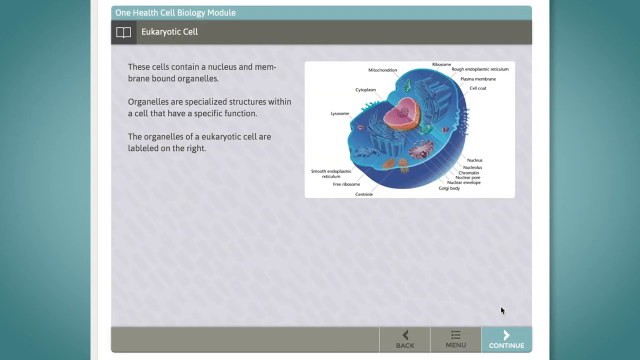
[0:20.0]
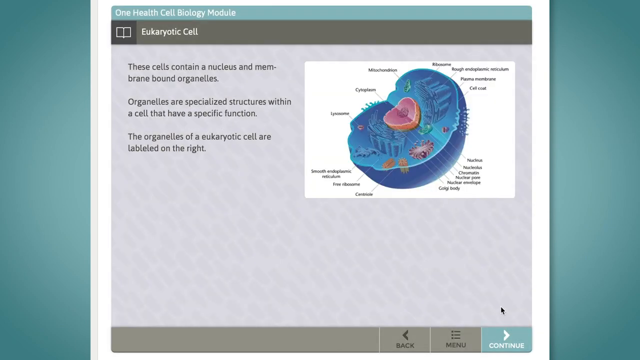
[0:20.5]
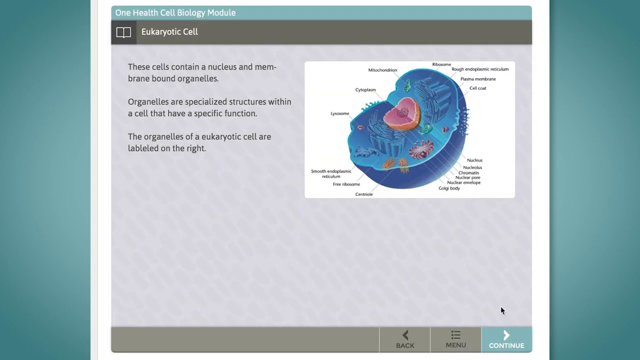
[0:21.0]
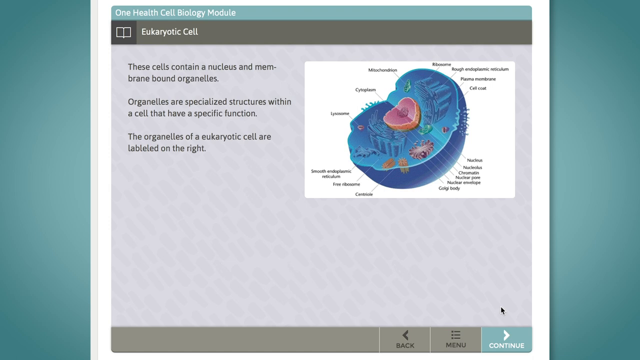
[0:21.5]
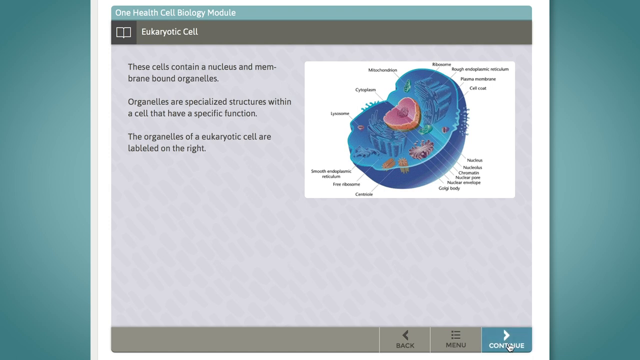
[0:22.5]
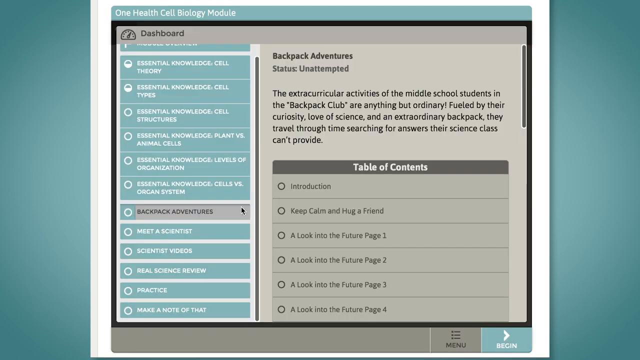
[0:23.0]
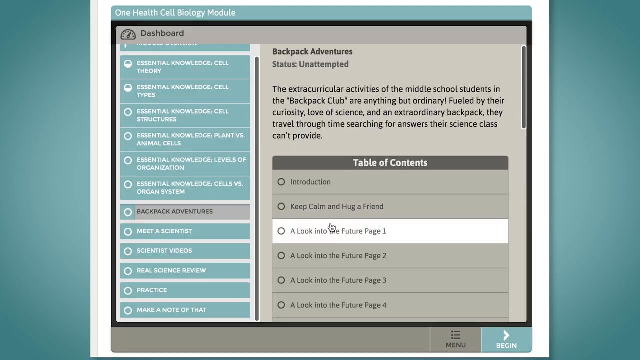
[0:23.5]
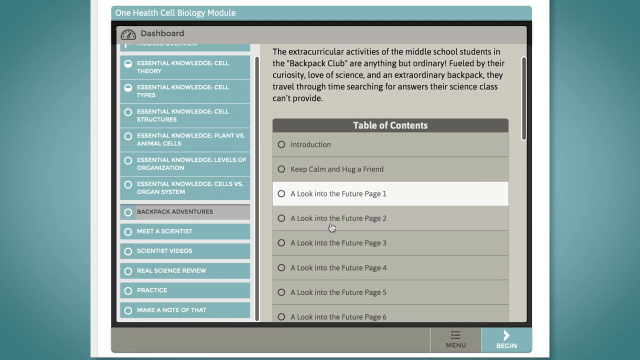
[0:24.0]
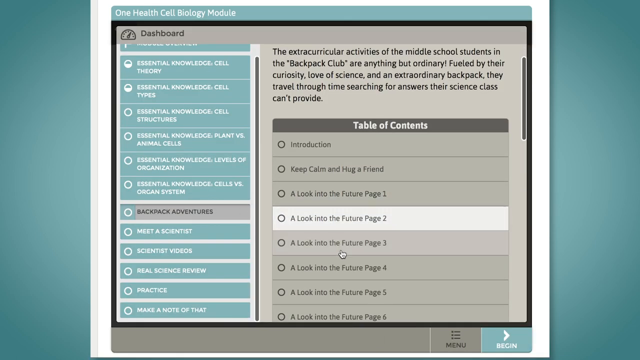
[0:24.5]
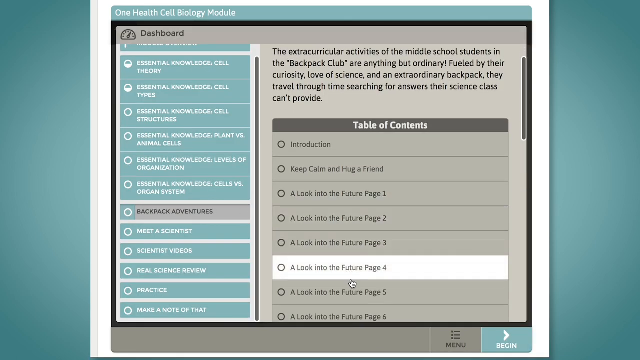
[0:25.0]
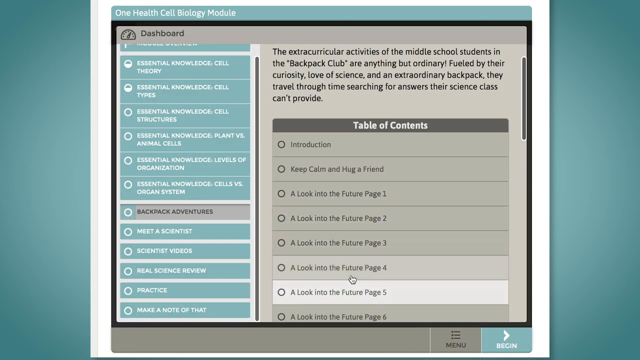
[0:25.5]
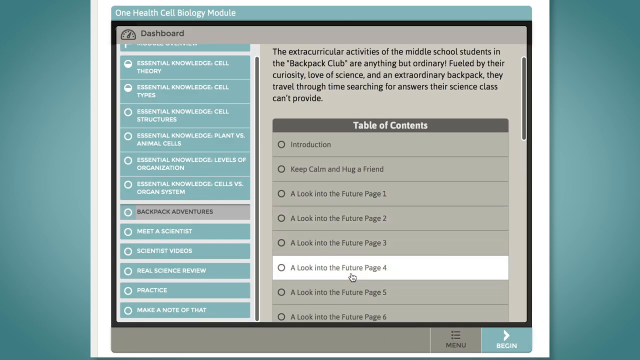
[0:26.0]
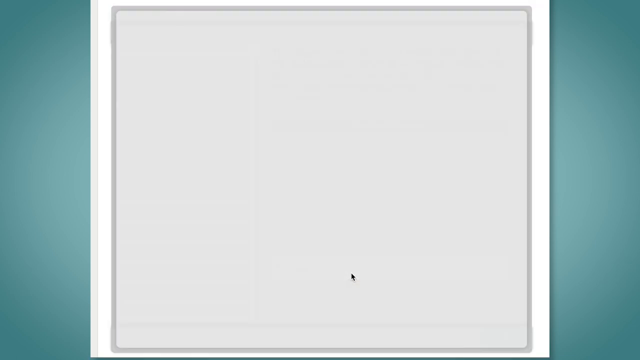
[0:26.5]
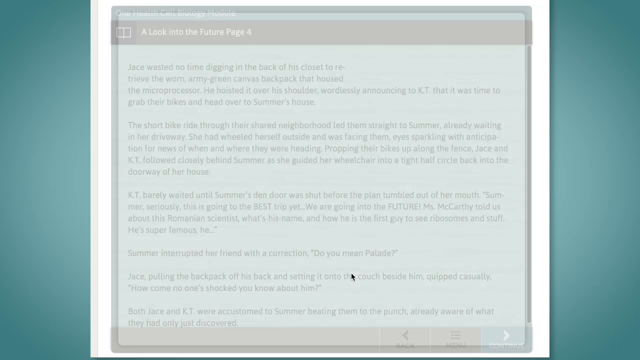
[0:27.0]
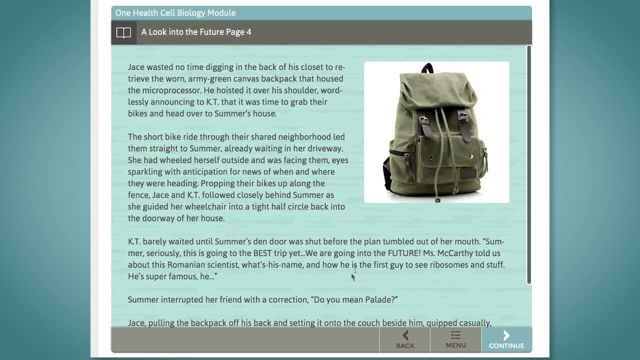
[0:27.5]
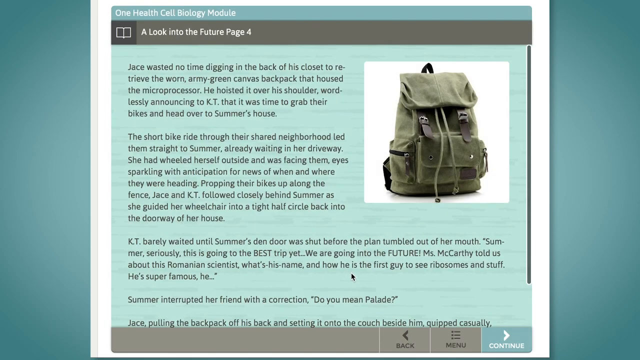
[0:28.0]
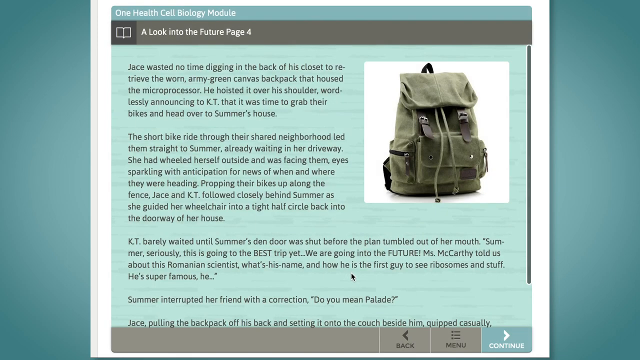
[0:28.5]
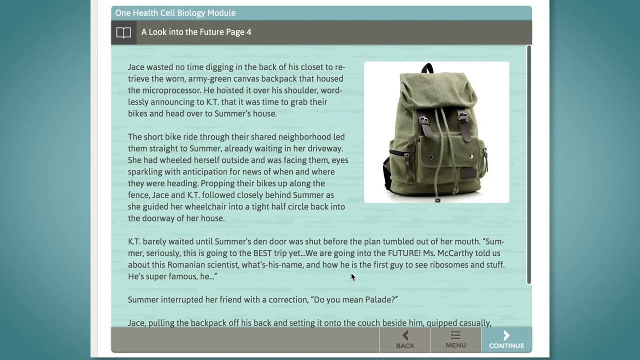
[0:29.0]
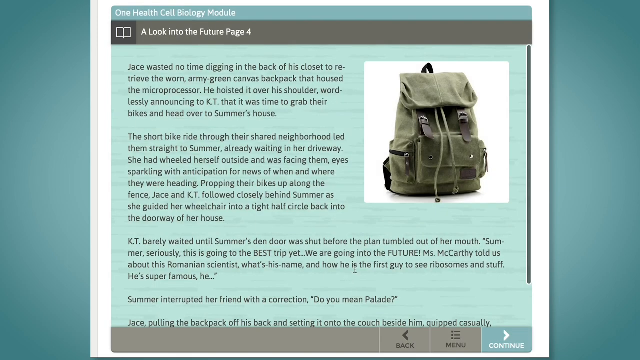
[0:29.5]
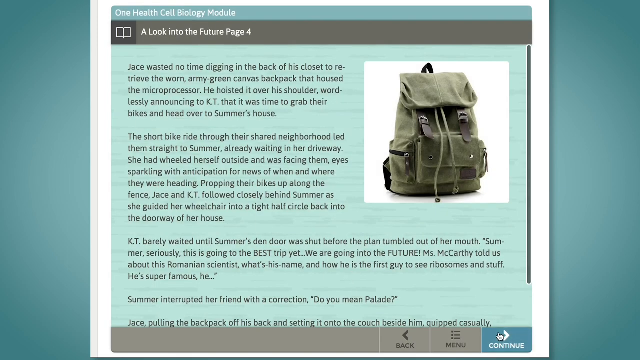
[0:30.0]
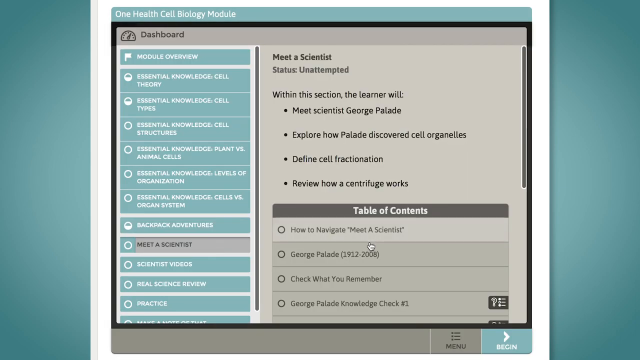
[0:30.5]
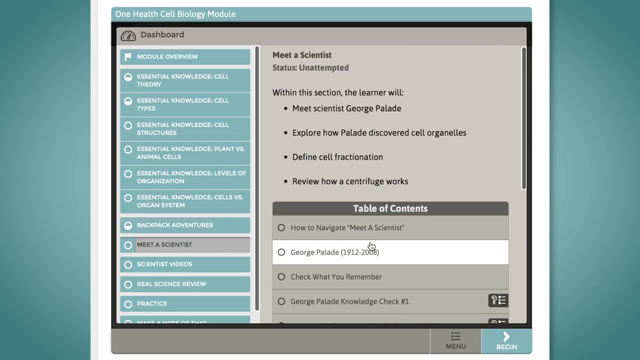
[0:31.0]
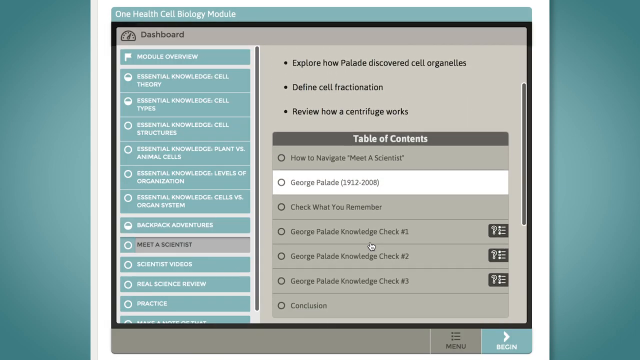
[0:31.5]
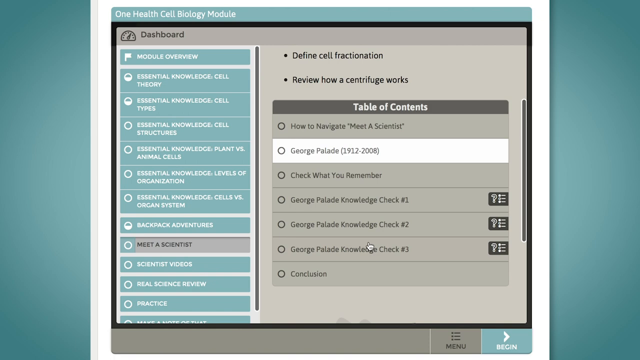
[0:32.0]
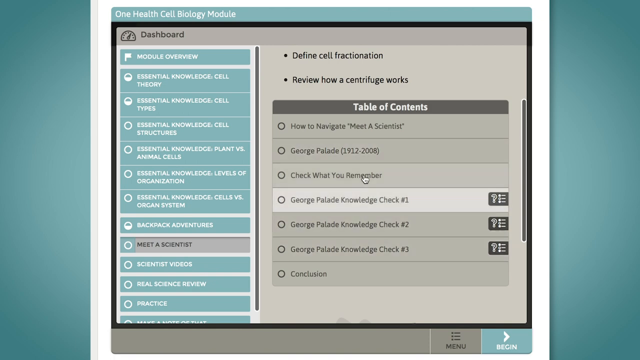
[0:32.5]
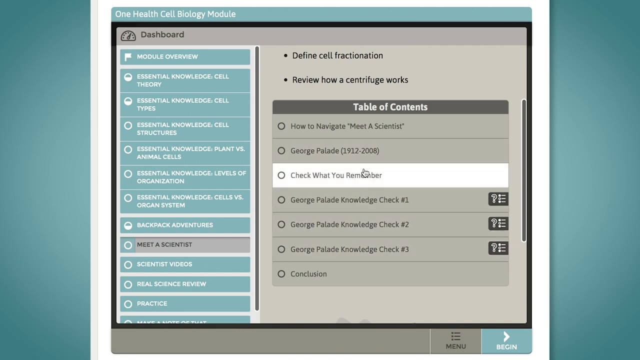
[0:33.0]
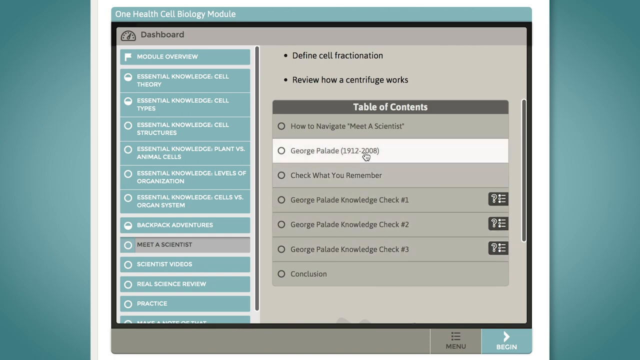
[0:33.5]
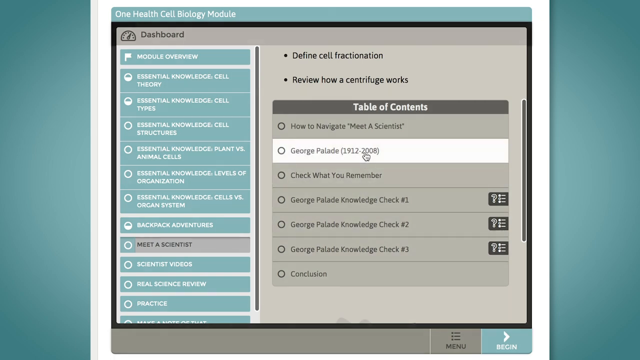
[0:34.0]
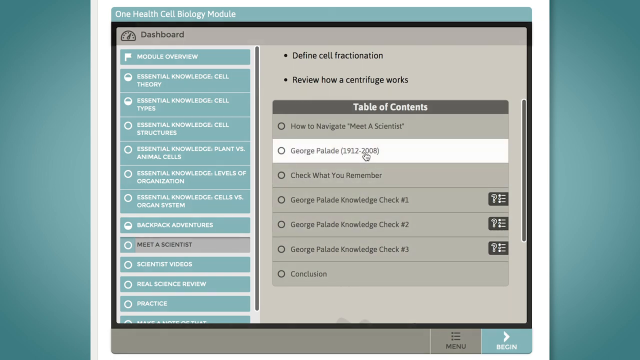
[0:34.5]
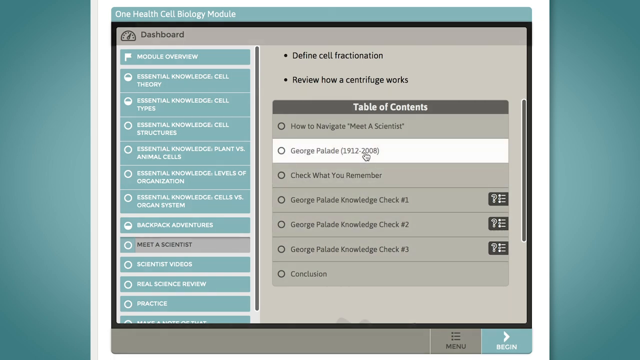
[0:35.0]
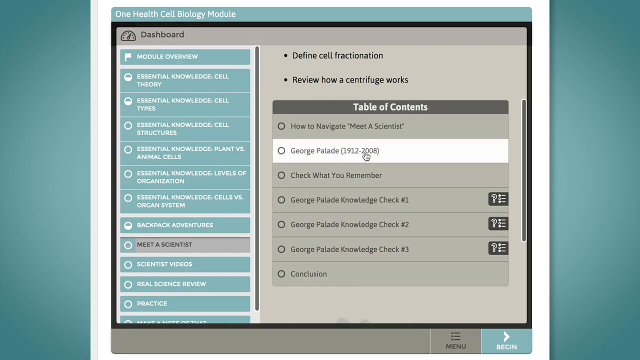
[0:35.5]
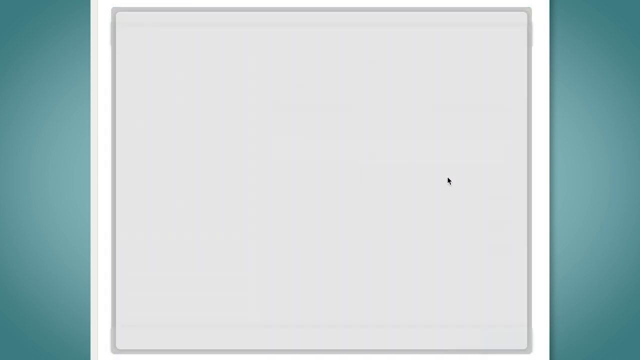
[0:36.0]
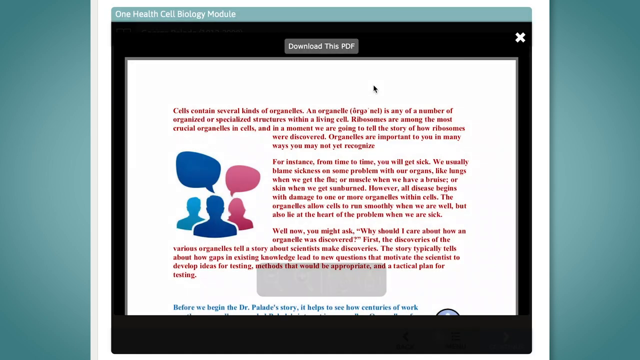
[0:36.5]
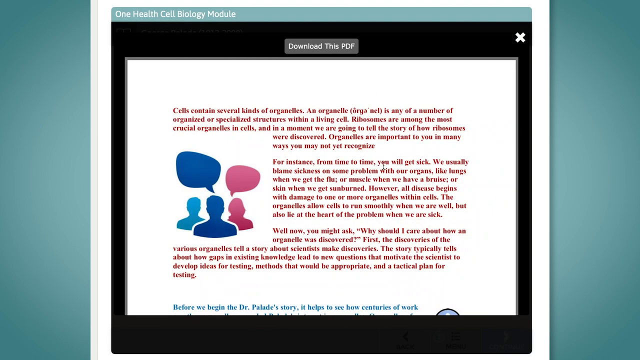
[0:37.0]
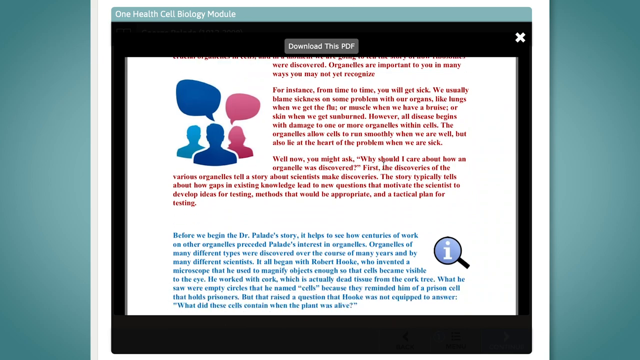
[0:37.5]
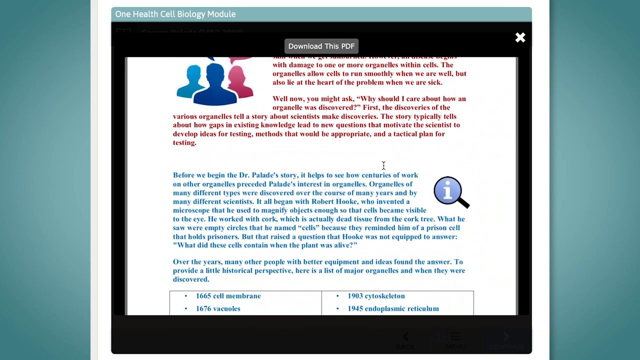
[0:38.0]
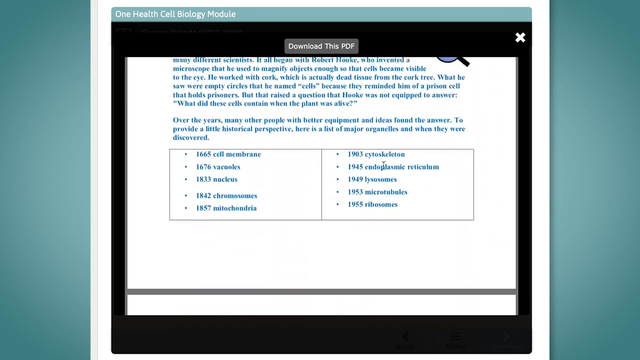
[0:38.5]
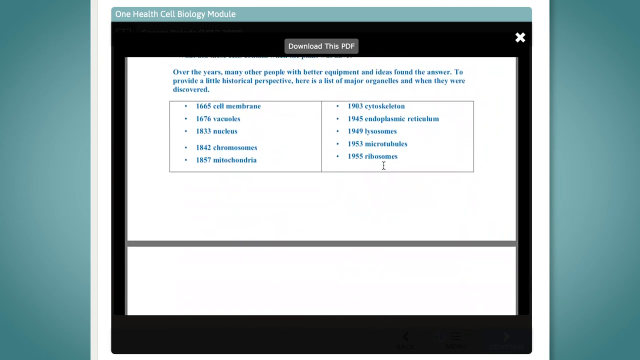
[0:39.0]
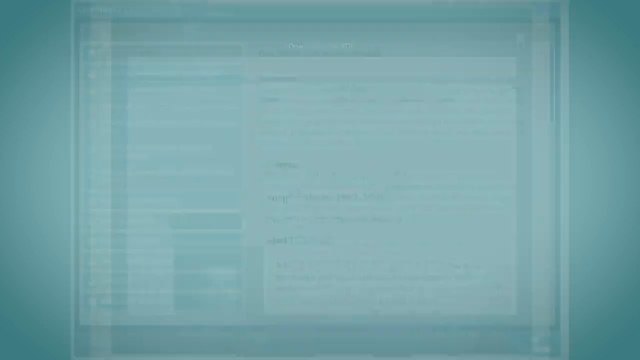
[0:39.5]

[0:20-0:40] On a blue background is an image of a cell labeled "One Health Cell Biology Module". The cell's parts are labeled; the image is in color, mostly blue, showing an interior view, with black labels. On-screen text reads "these cells contain a nucleus and a membrane bound organelles. Organelles are specialized structures within a cell that have specific function. The organelles of this cell are labeled on the right." The screen then changes to the dashboard of the One Health Biology module, in colors of green and gray, which is scrolled through, showing the table of contents. One item is selected: "a look into the future, page four", with black text on a green background and an inset photo of an army green backpack. The view returns to the module dashboard, scrolling, and another item is chosen: red and blue text on a white background, scrolled through and not legible. Then the view returns to the module.